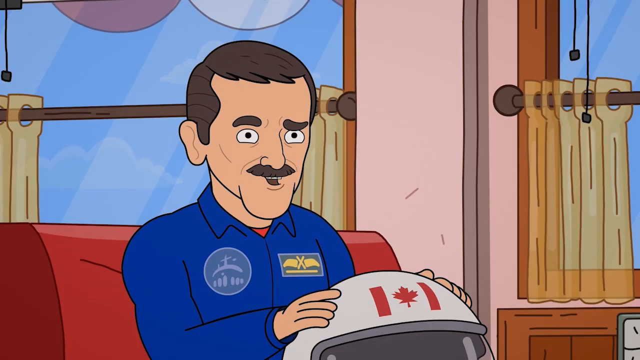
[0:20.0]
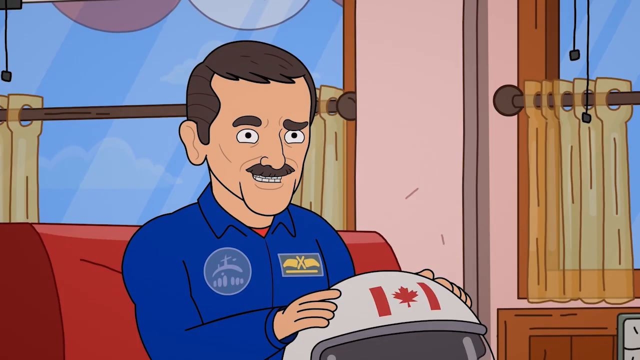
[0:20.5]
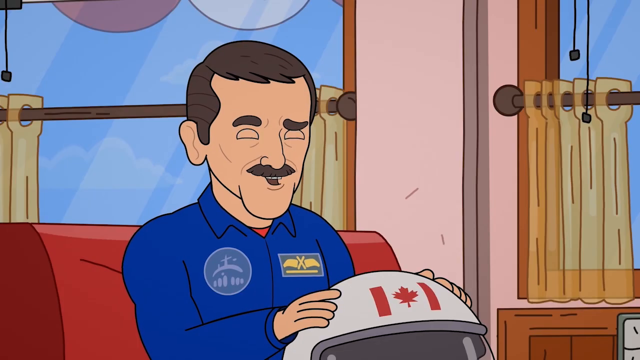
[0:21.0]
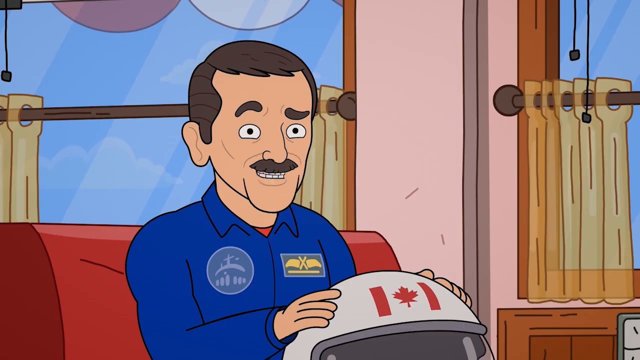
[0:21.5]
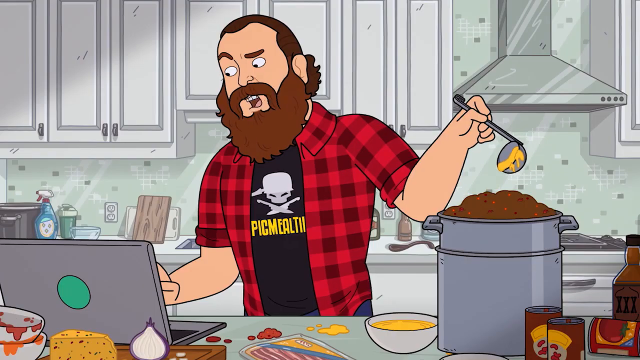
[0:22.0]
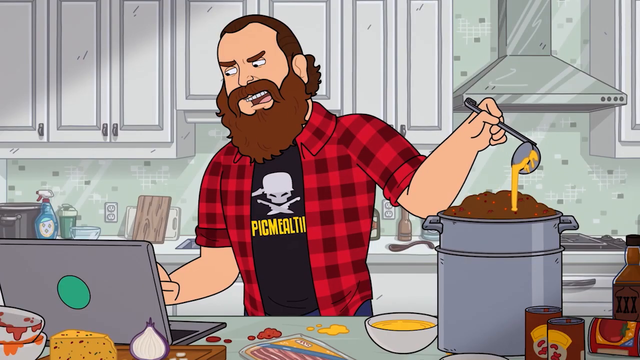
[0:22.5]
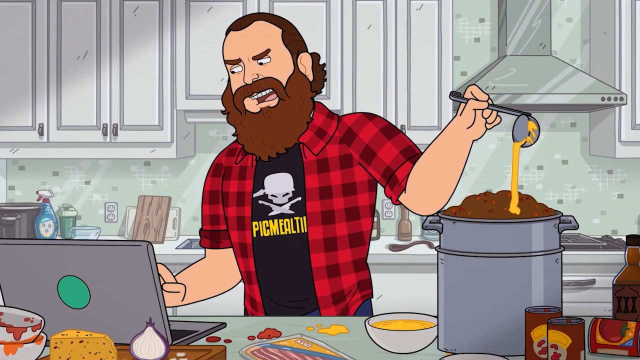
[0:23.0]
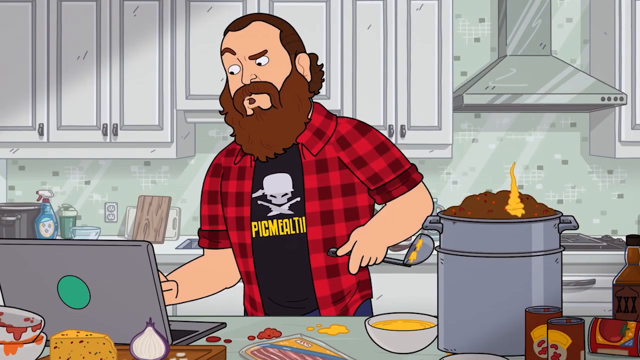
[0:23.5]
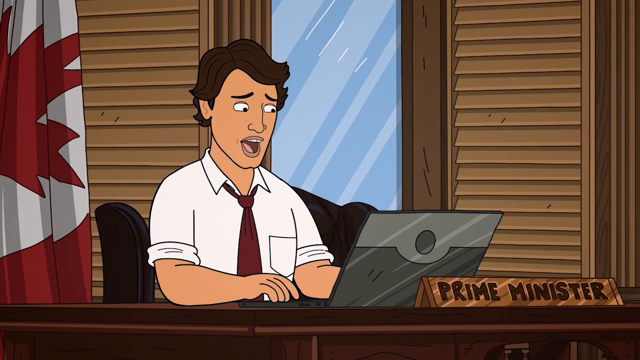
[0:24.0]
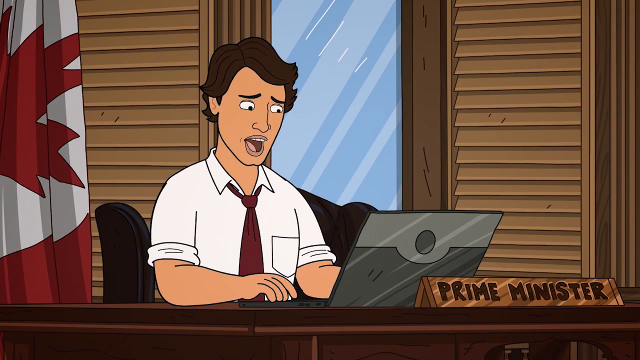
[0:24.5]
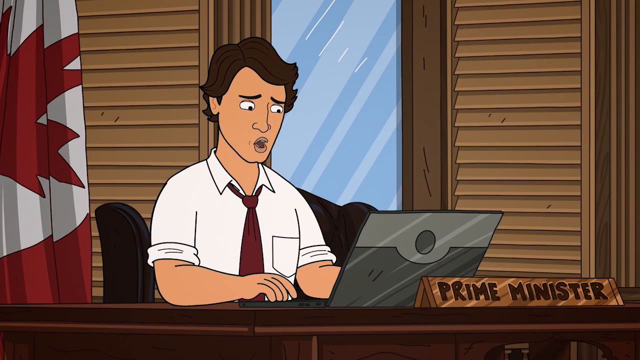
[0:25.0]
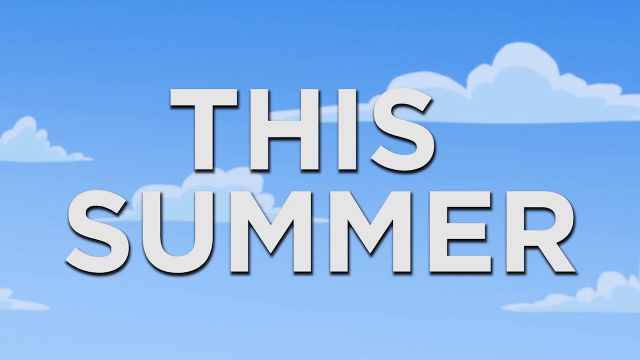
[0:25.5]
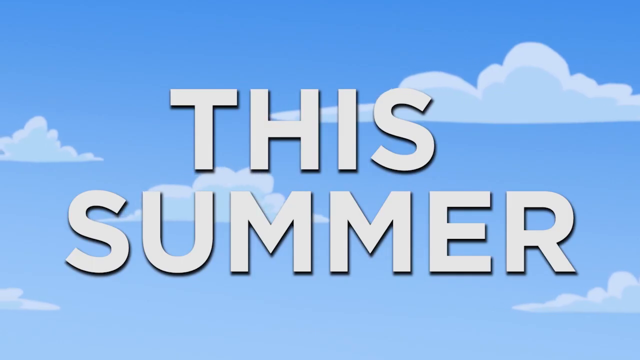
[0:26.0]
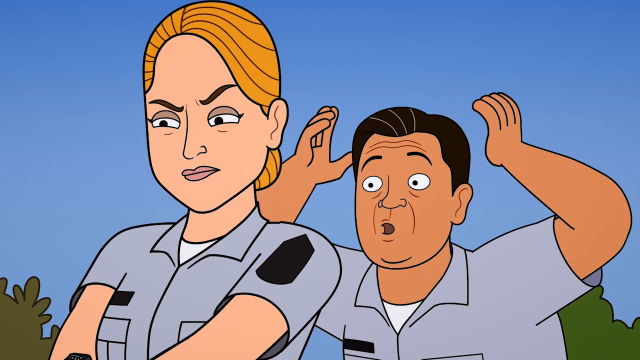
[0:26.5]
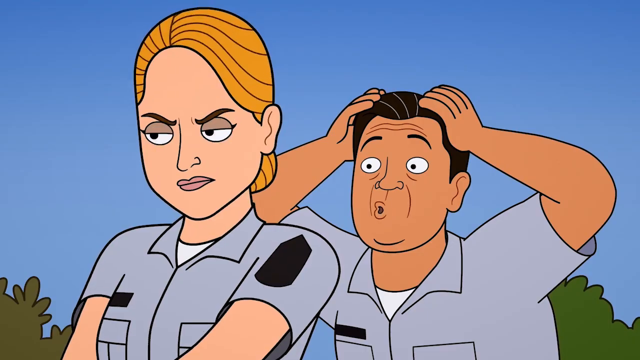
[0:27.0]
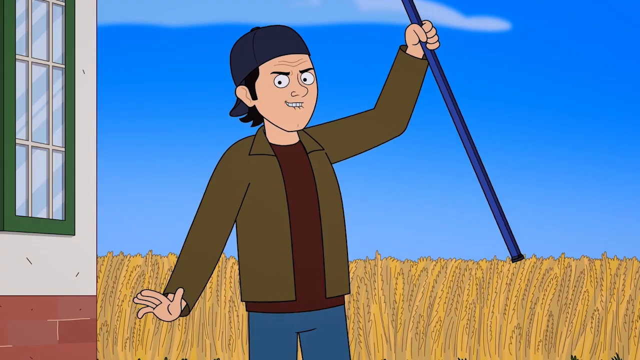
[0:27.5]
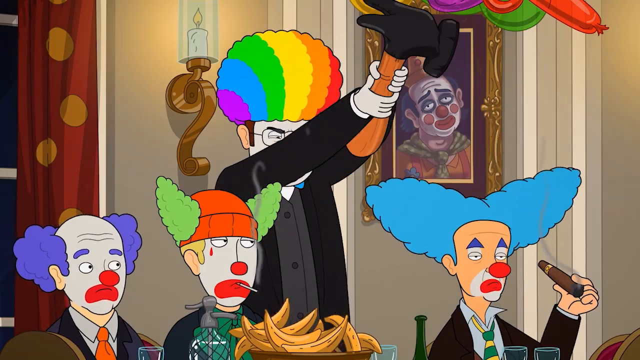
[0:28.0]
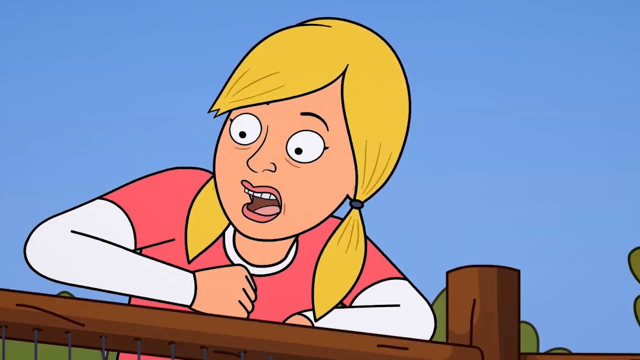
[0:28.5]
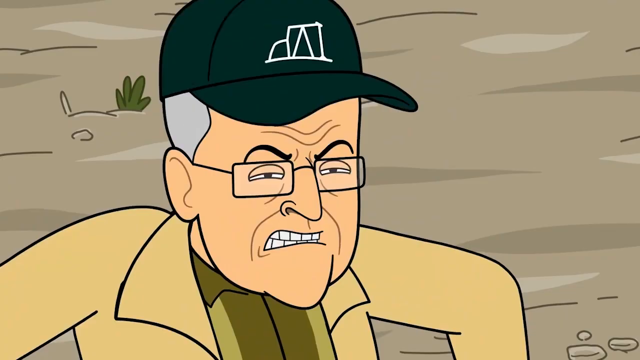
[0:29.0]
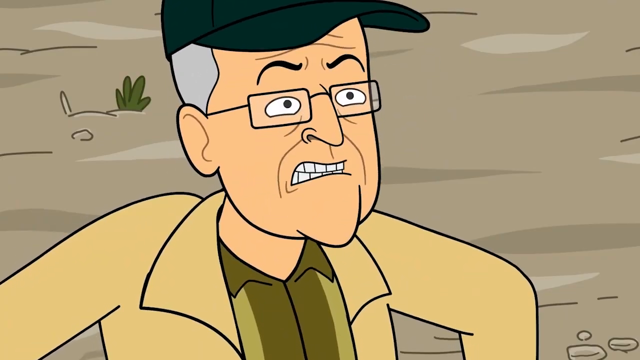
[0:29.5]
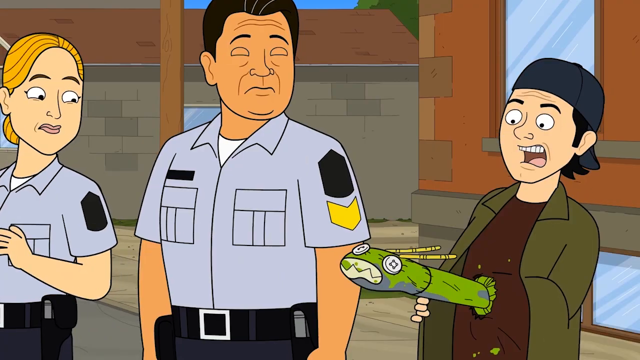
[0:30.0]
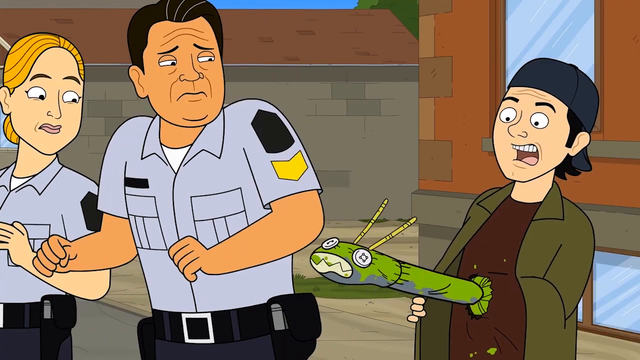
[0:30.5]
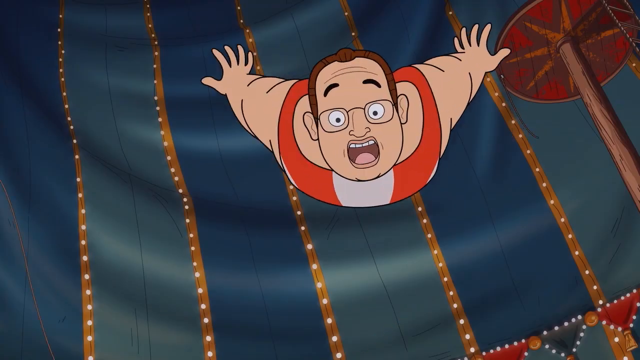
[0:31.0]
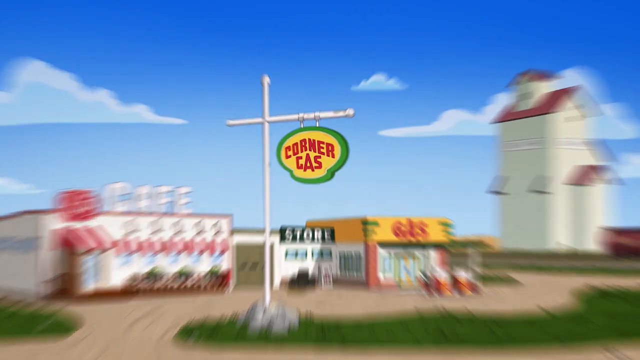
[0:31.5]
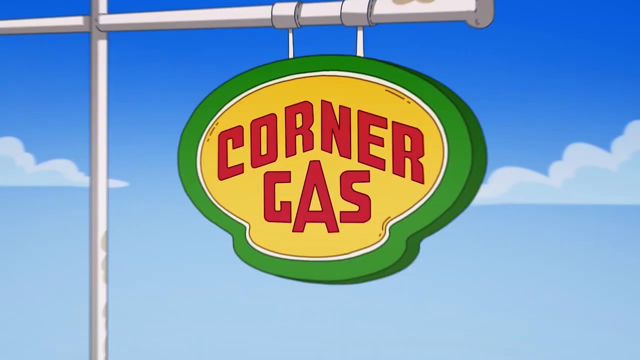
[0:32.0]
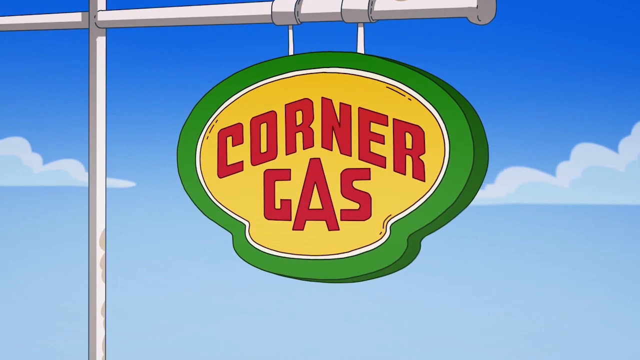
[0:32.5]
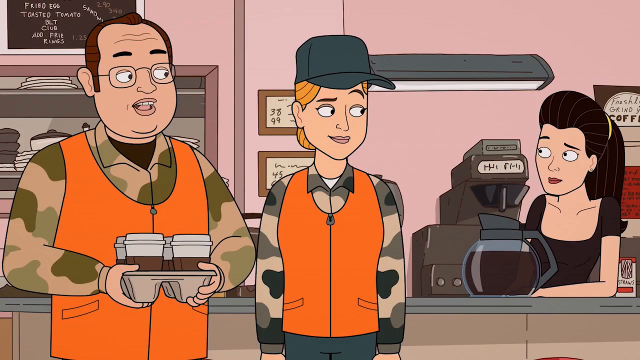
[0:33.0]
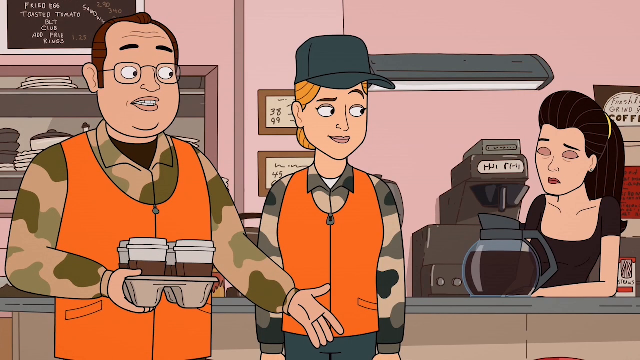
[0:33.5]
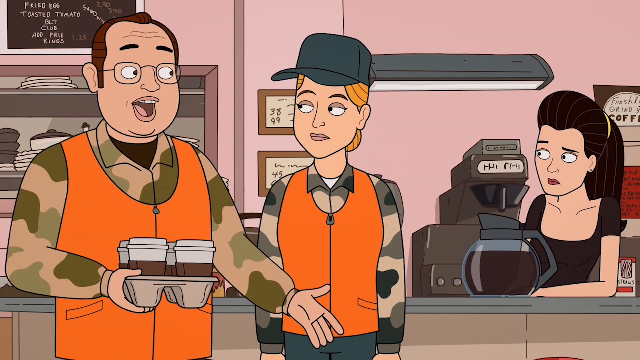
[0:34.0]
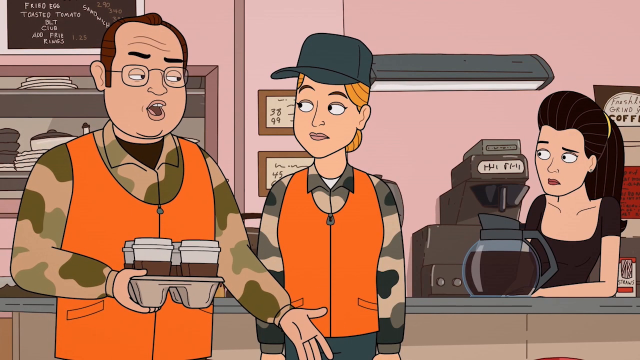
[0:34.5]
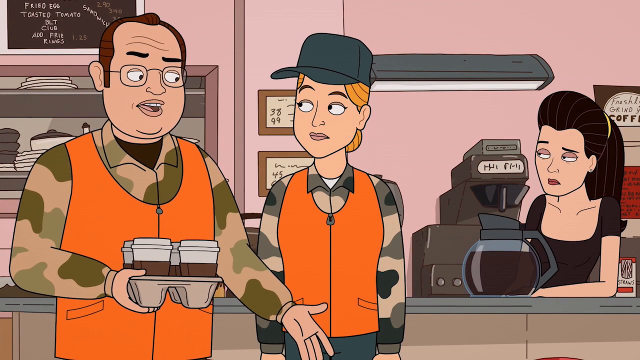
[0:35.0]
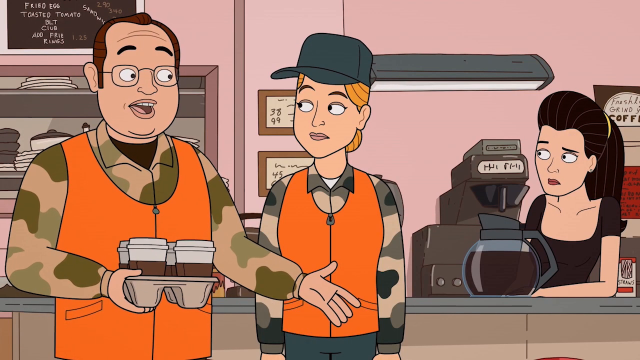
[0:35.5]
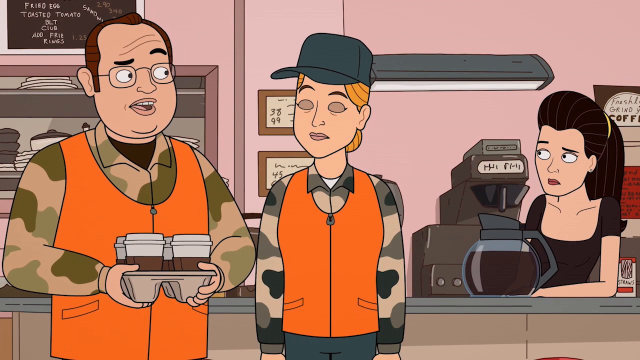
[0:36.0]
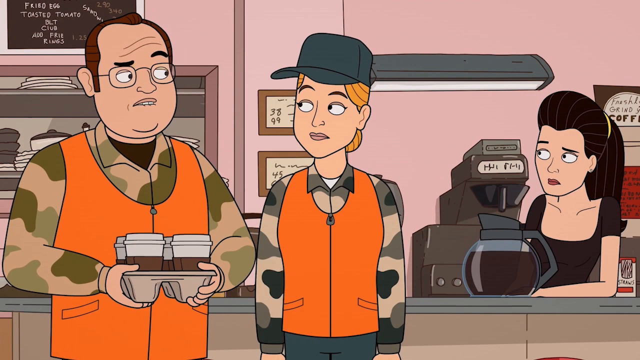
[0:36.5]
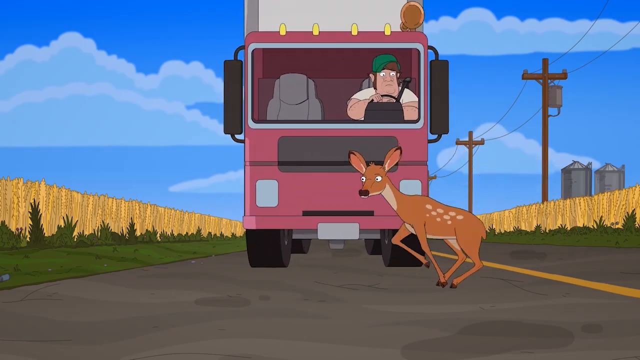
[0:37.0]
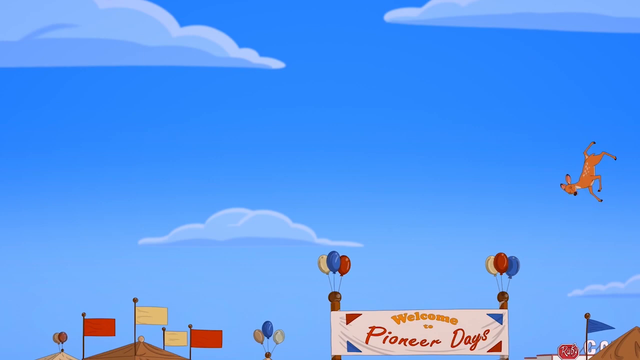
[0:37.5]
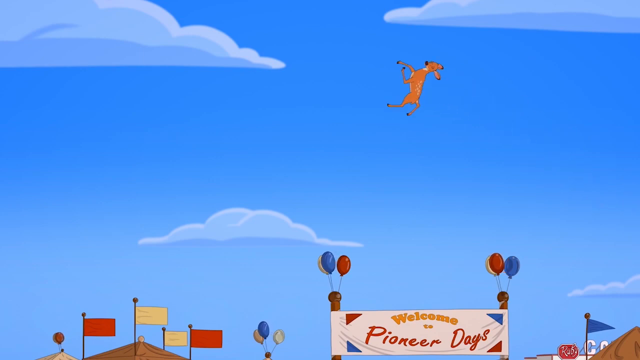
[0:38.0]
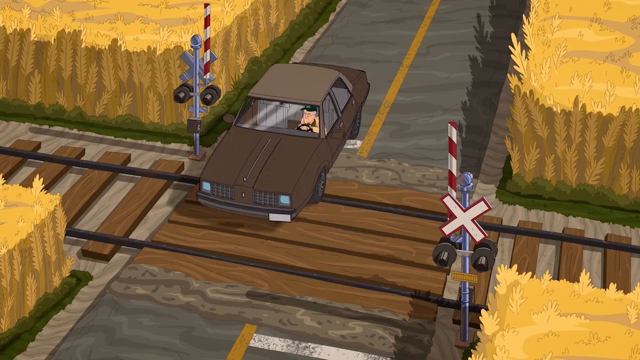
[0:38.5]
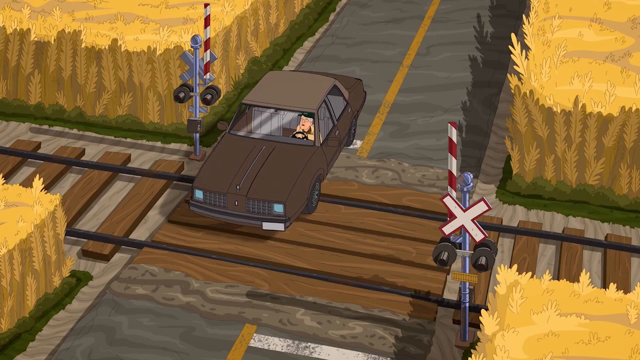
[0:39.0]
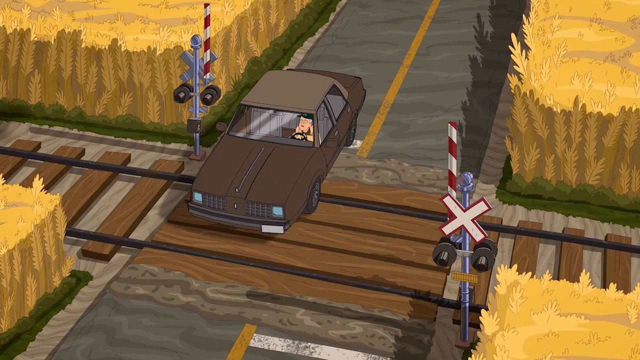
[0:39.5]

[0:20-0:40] An animated astronaut sits at a booth in a restaurant, talking towards the camera. A man cooks, looking at his laptop while pouring some food into a large pot of another type of food. An animated version of the Canadian Prime Minister appears, with a "Prime Minister" tag on his desk and the Canadian flag behind him. A title screen reading "This Summer" takes up the whole screen over a simple blue sky and white cloud background. A series of other clips follows, including a person at a bachelor auction, a number of clowns, and people yelling at each other. The Corner Gas sign is shown hanging down, two people in hunting vests pick up coffees in a restaurant, and a man stops on train tracks.